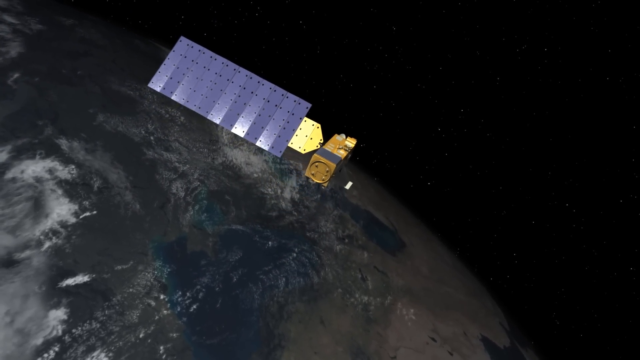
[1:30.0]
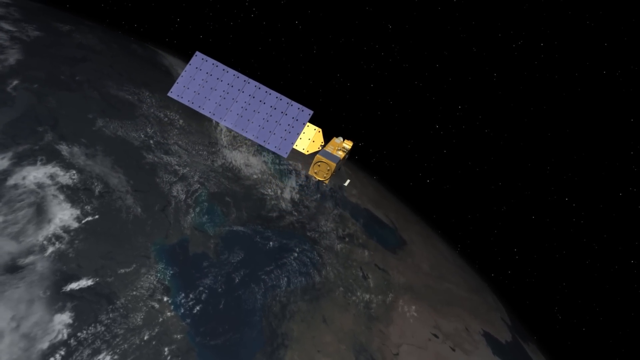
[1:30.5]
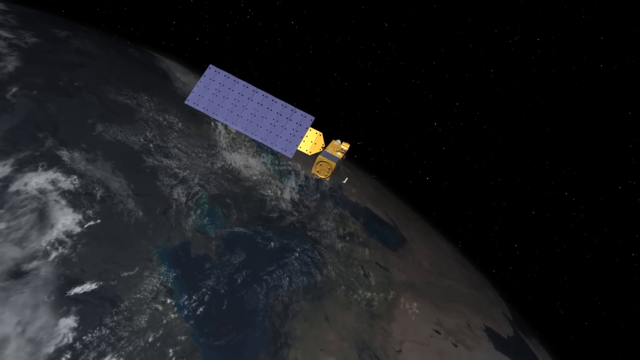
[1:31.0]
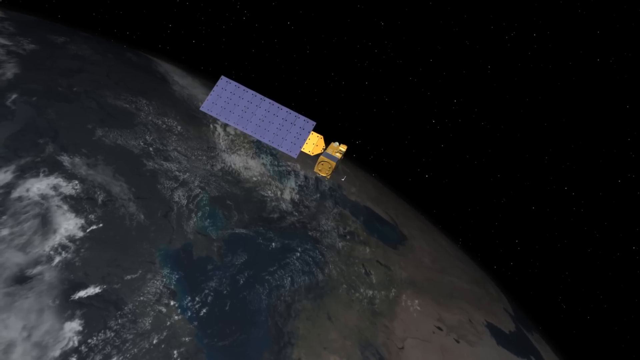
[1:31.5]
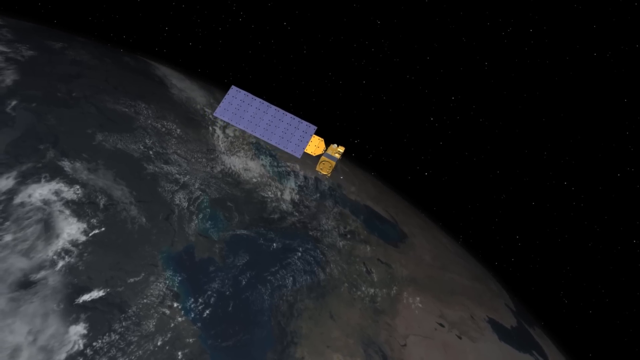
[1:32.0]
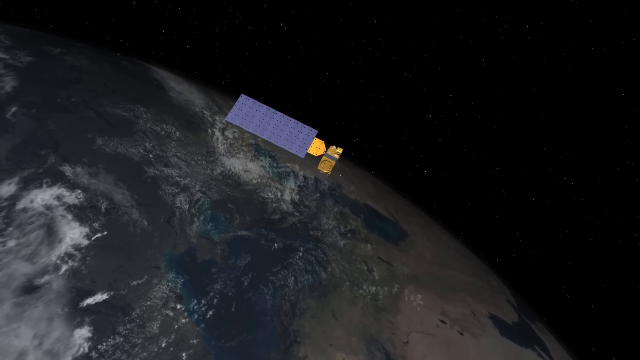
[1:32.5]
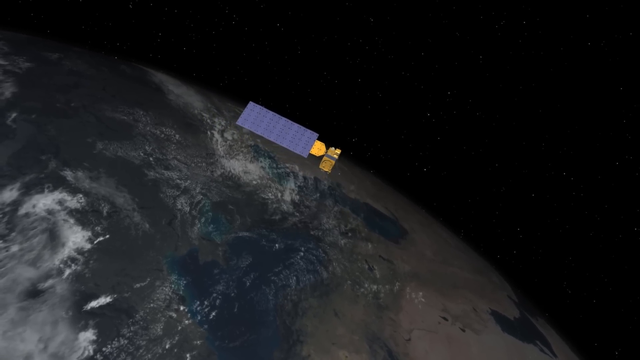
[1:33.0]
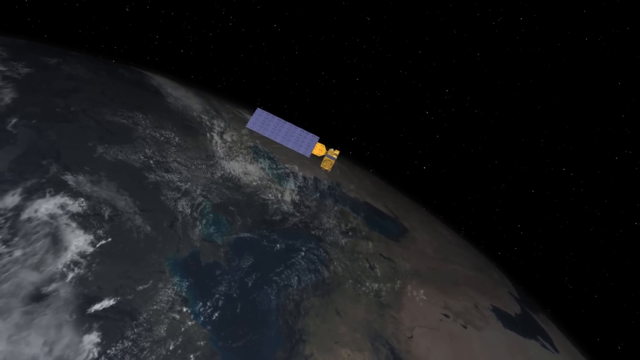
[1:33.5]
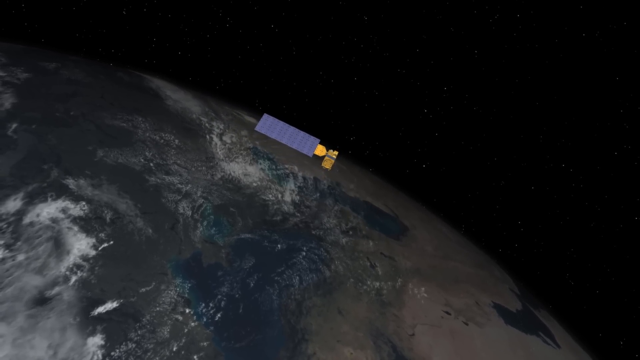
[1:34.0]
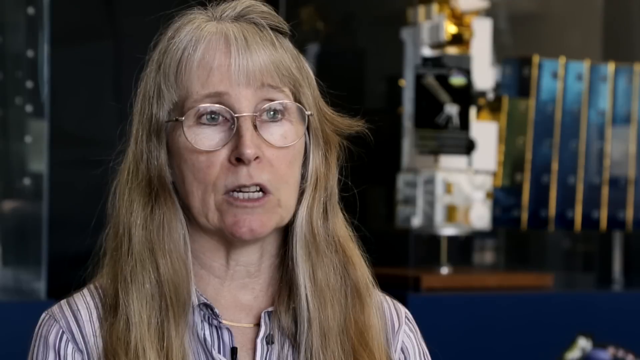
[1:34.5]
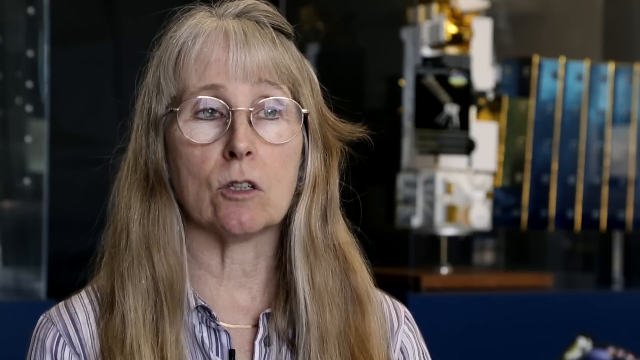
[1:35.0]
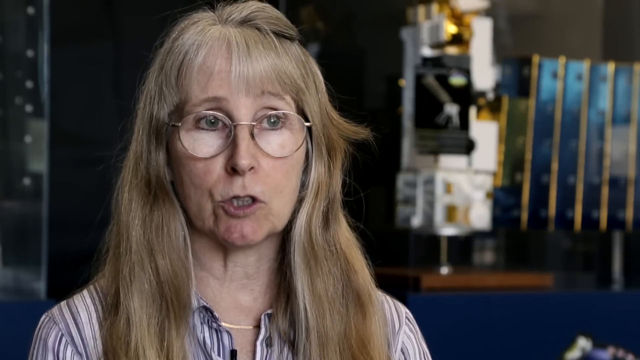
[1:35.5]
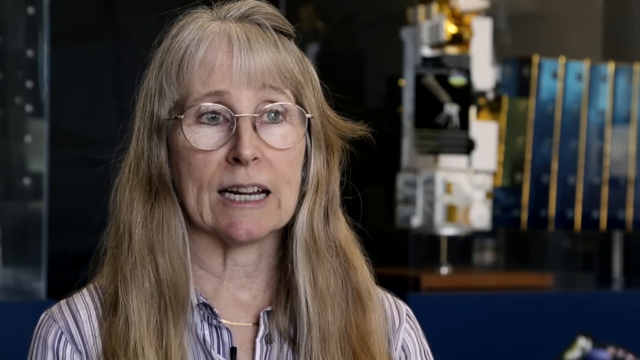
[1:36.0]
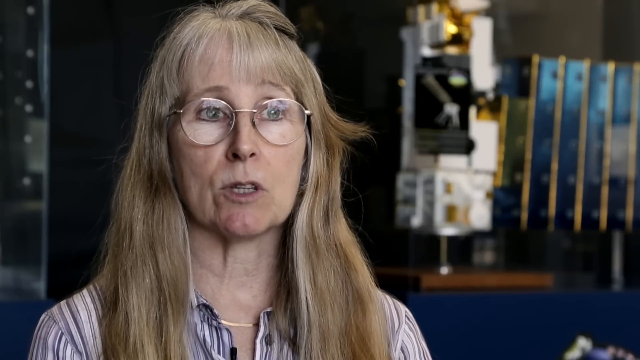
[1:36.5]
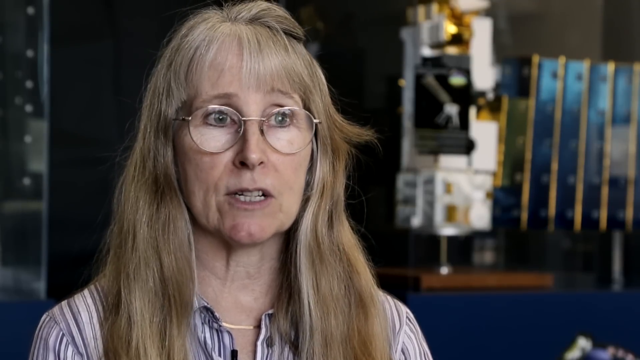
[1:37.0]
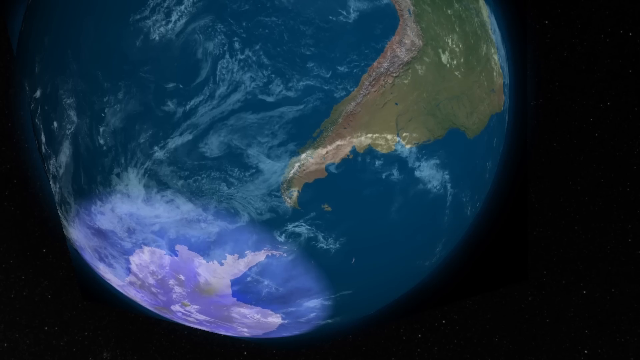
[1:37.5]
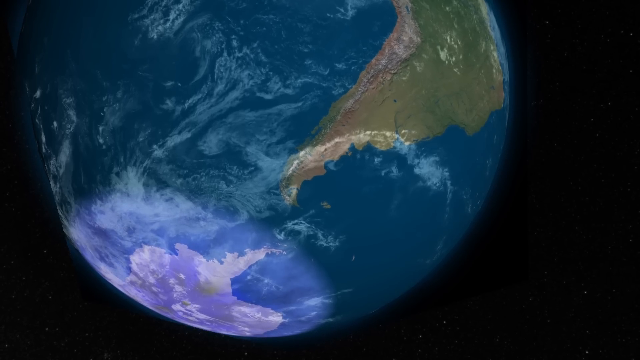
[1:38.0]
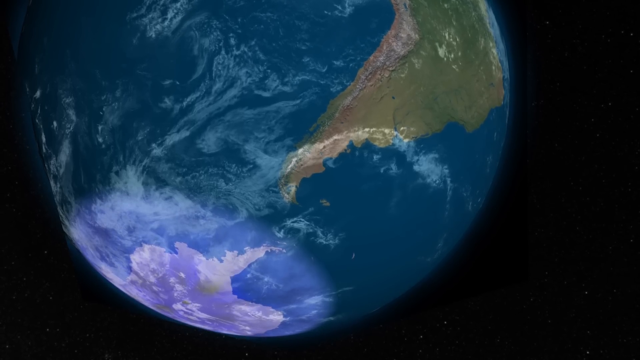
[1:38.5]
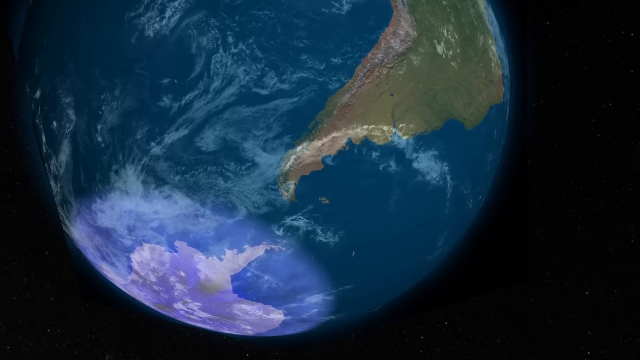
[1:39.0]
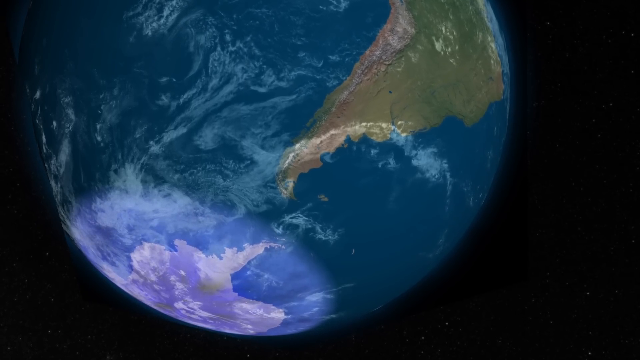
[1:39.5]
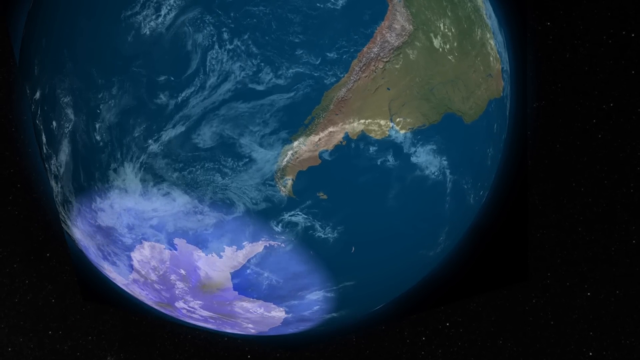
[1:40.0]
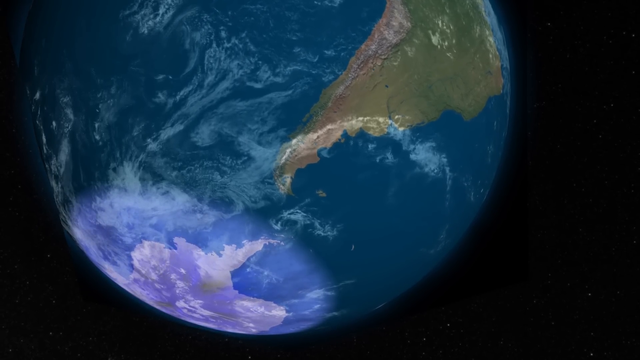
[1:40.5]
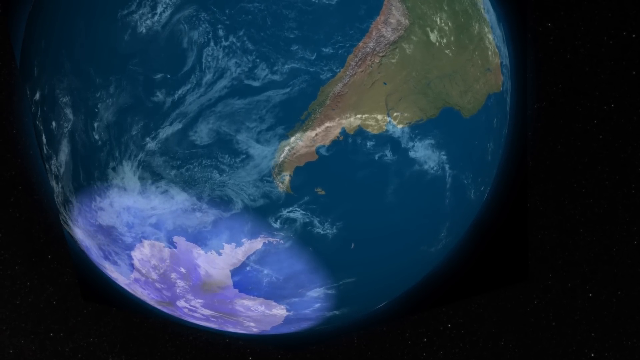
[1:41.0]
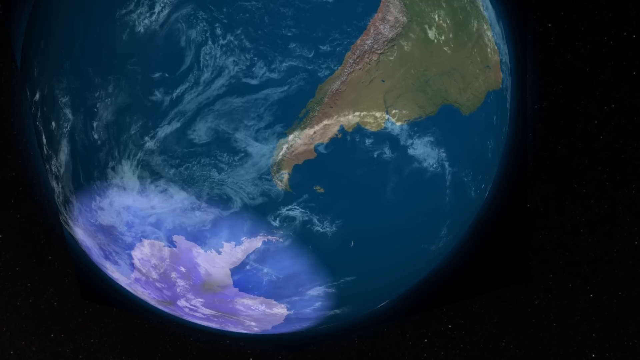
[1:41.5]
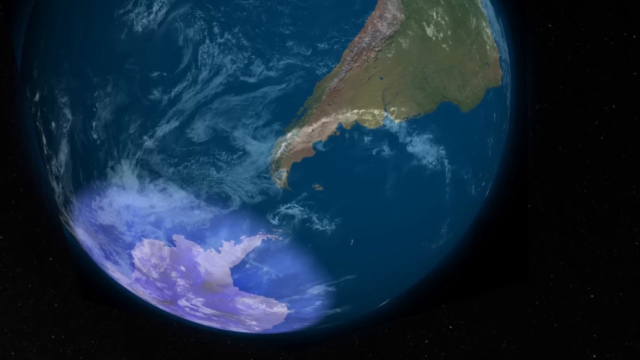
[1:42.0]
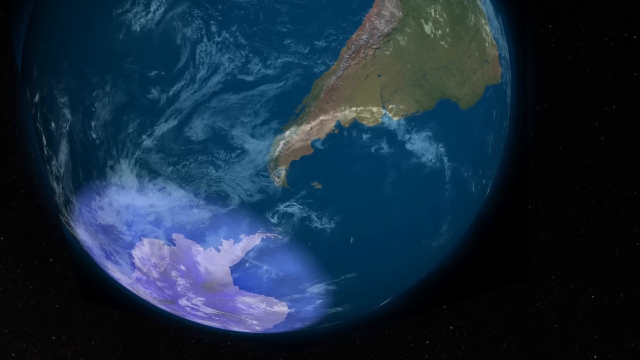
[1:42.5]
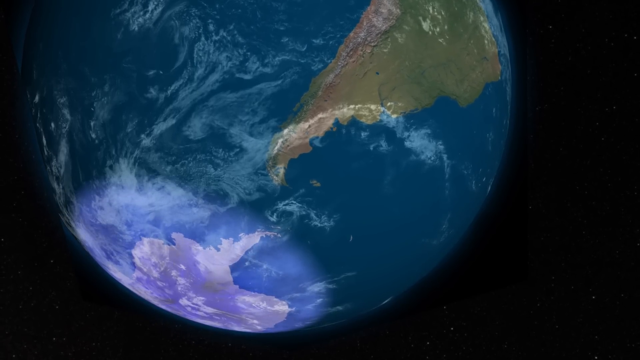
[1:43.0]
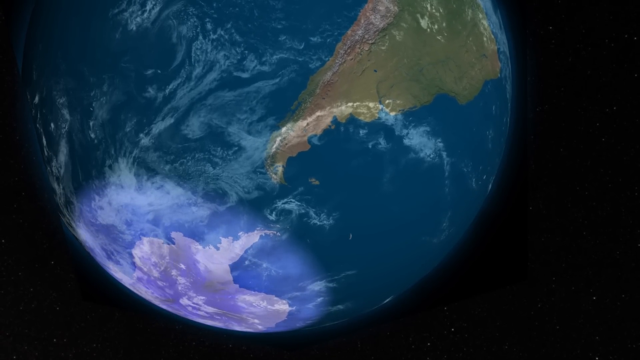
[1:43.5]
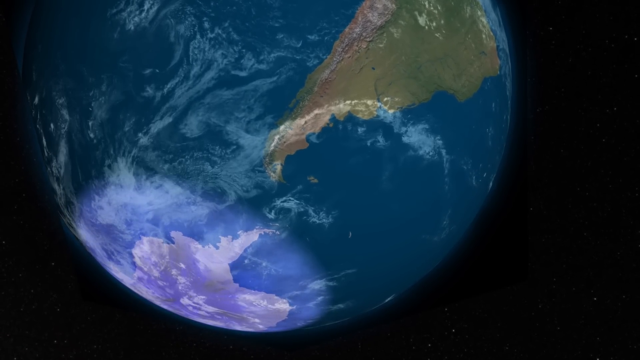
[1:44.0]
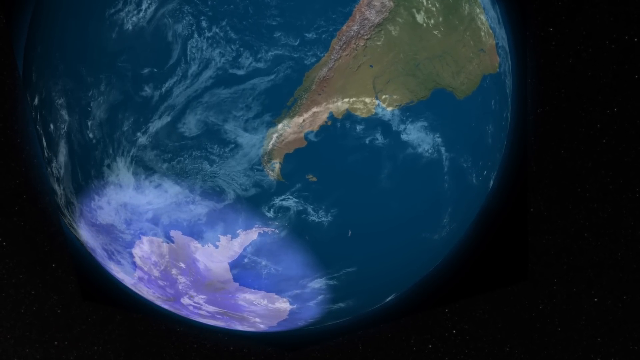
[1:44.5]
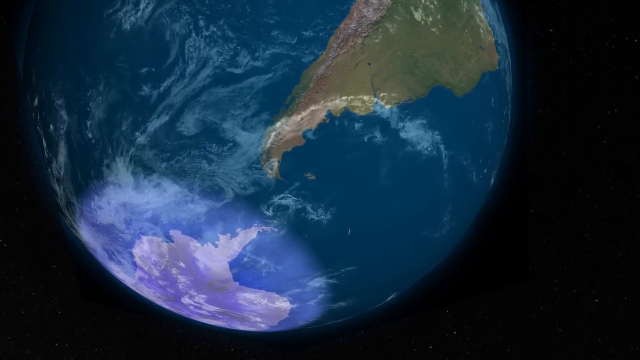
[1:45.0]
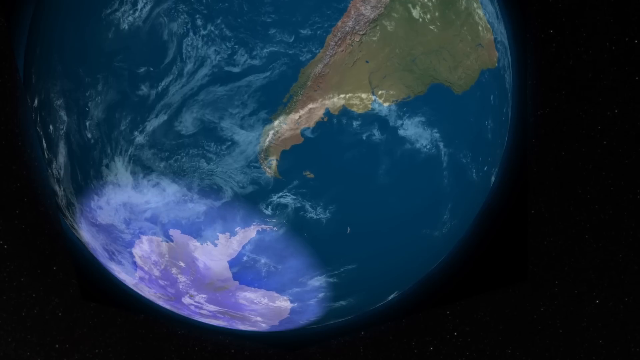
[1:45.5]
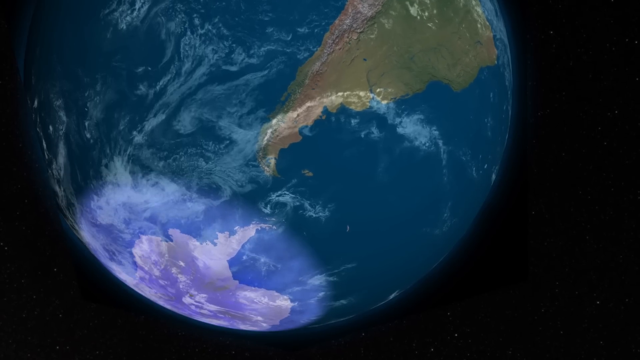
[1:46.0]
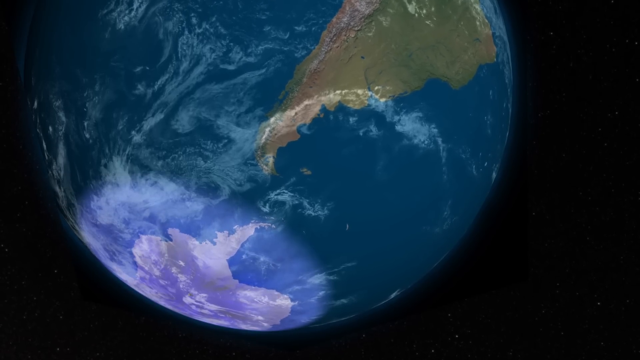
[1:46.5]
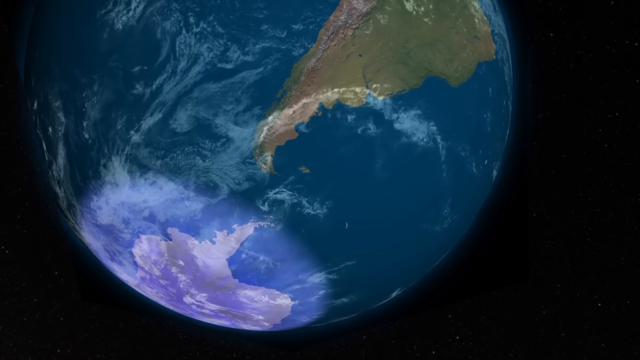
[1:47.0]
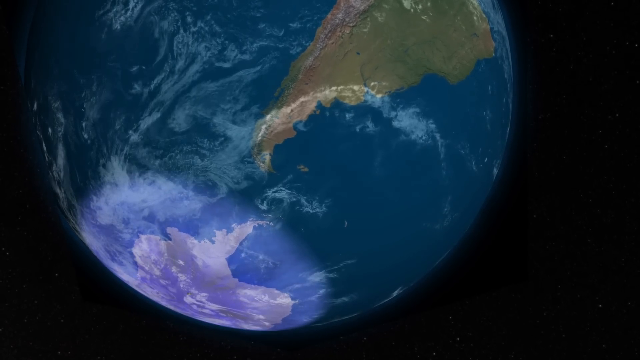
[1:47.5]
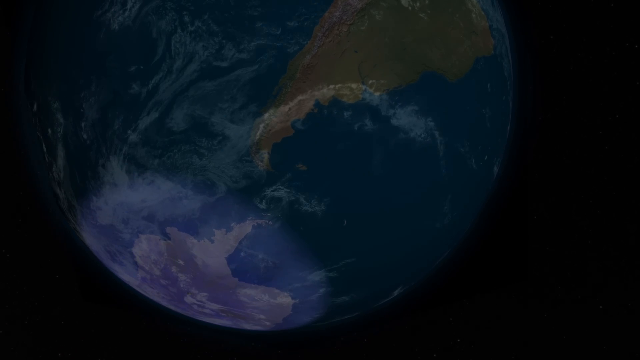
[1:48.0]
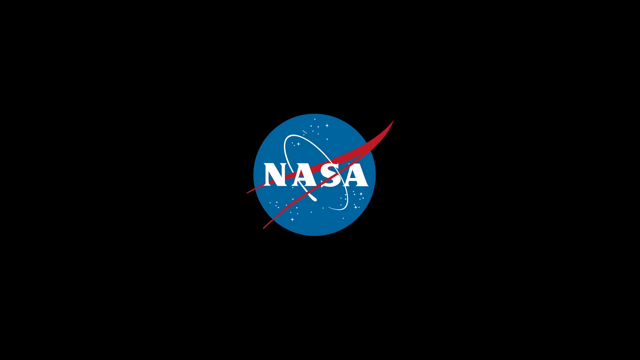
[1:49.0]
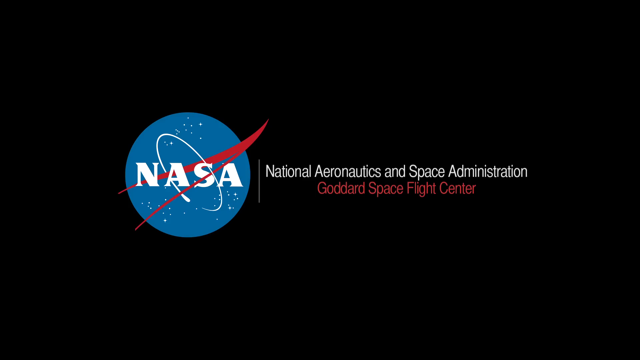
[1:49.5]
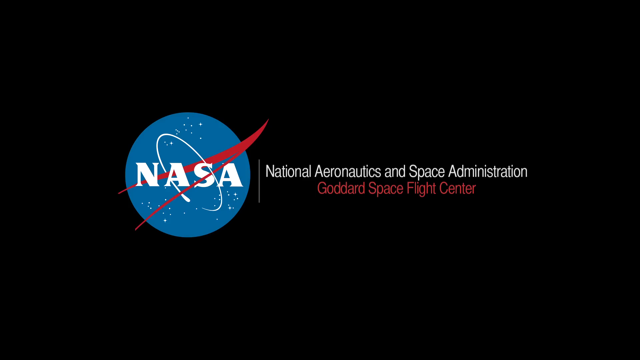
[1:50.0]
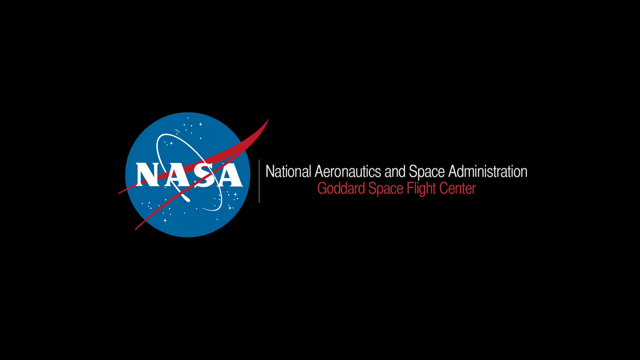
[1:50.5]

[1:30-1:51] What looks to be a purple, yellow and orange satellite is in outer space, with Earth also visible. It moves further from Earth while the camera moves away from it, pulling farther back. A woman with long blonde hair and glasses, who looks like she might be in her 50s, talks to the camera. Earth appears with blue and white swirls, with a blue and purple color that seems highlighted at the bottom, and Earth seems to be rotating. The picture fades out to black, and the NASA logo pops up with white text, along with a red line connecting to another red line with some white dots on it. Then white and red text pops up reading "National Aeronautics and Space Administration Goddard Space Flight Center."